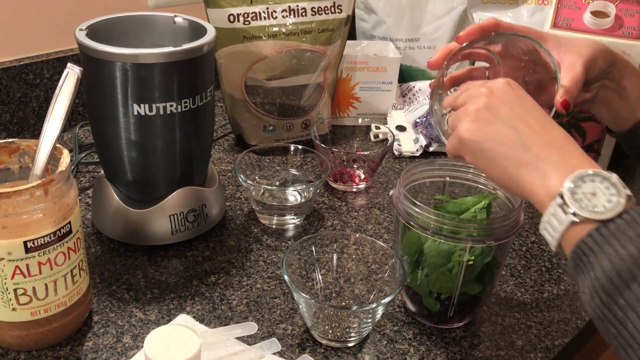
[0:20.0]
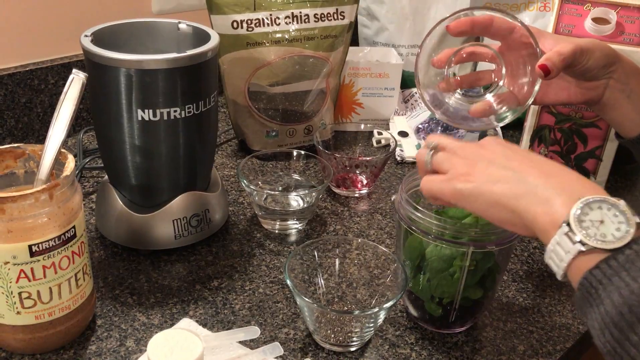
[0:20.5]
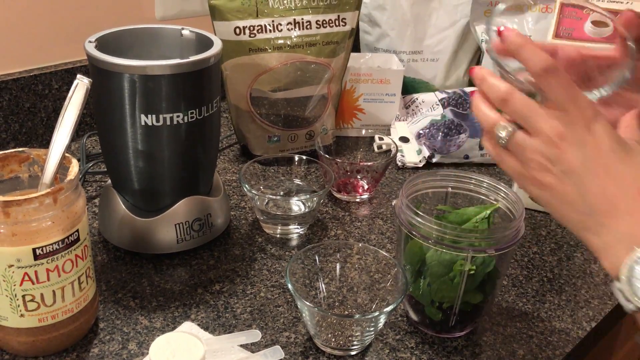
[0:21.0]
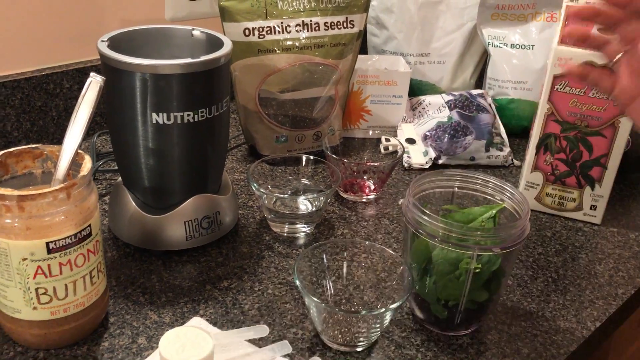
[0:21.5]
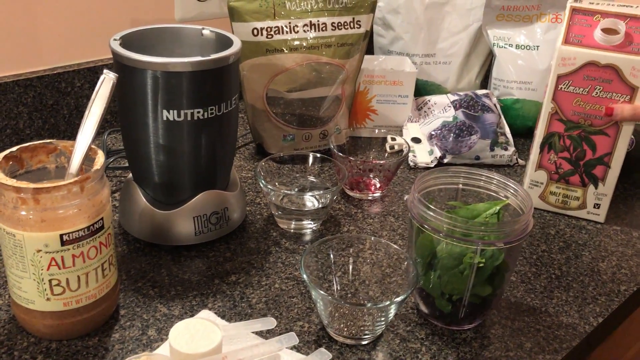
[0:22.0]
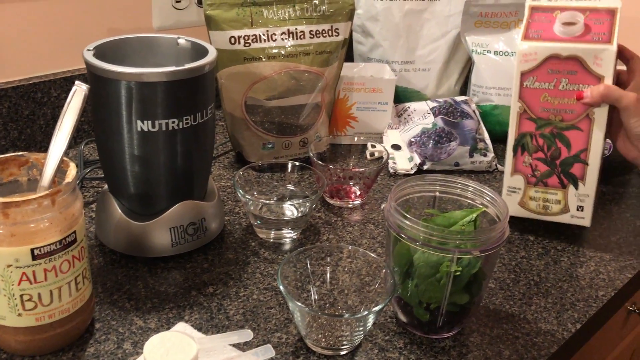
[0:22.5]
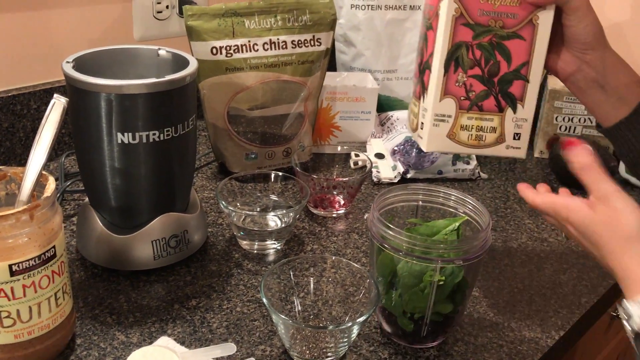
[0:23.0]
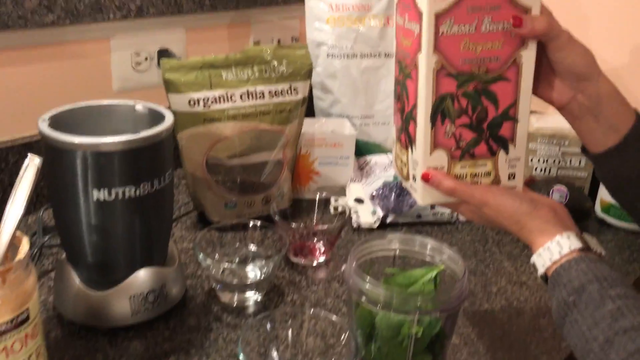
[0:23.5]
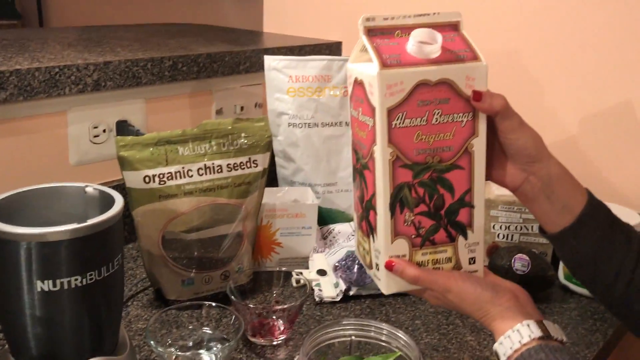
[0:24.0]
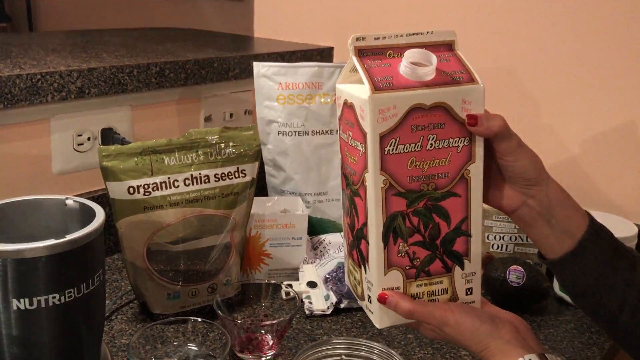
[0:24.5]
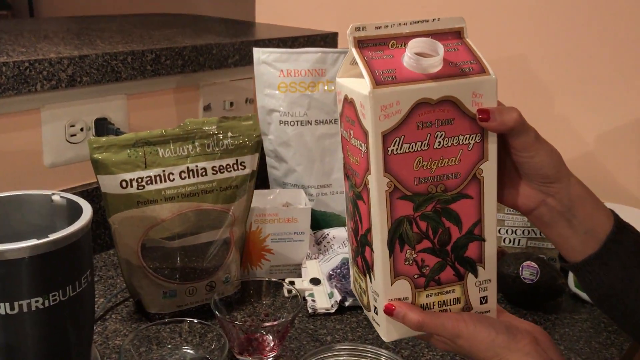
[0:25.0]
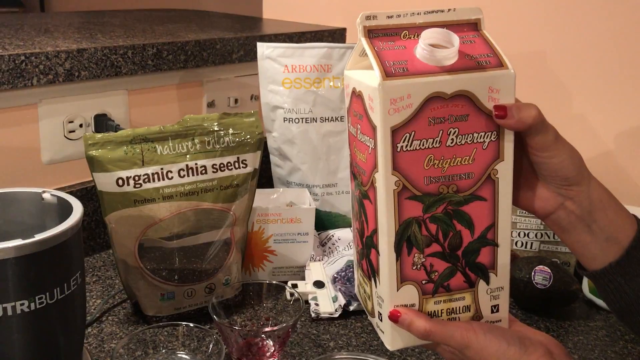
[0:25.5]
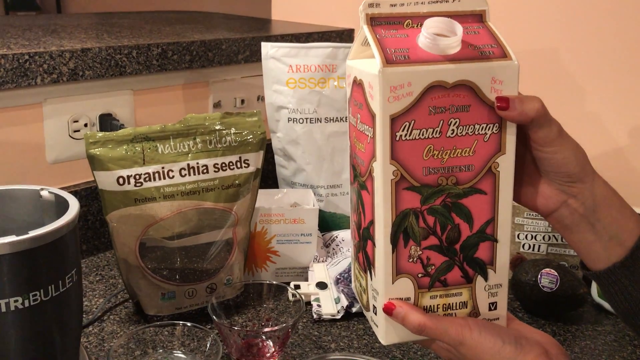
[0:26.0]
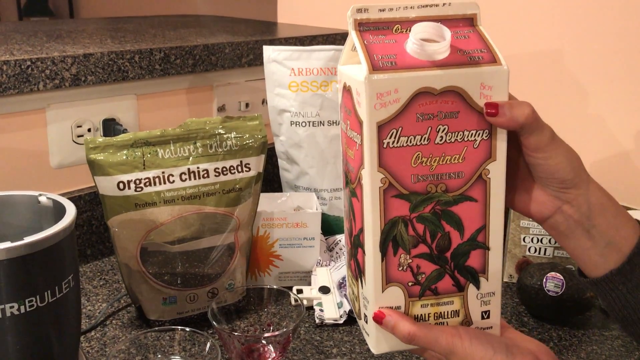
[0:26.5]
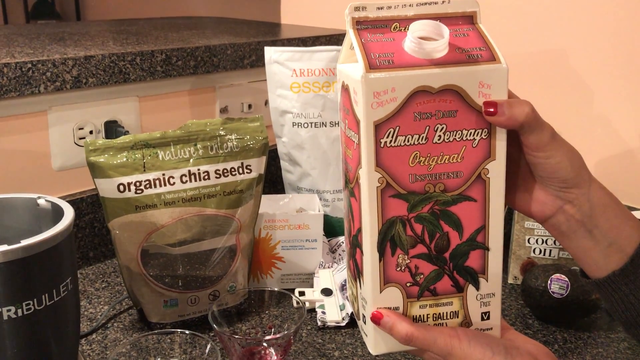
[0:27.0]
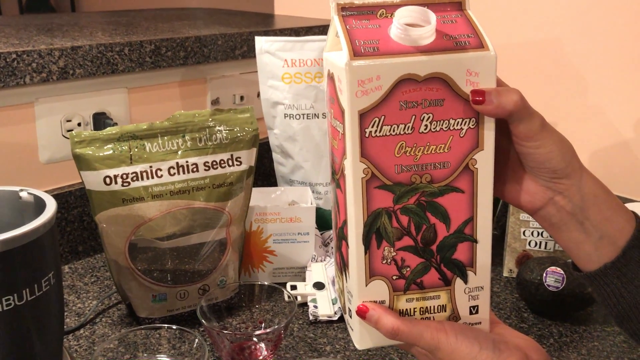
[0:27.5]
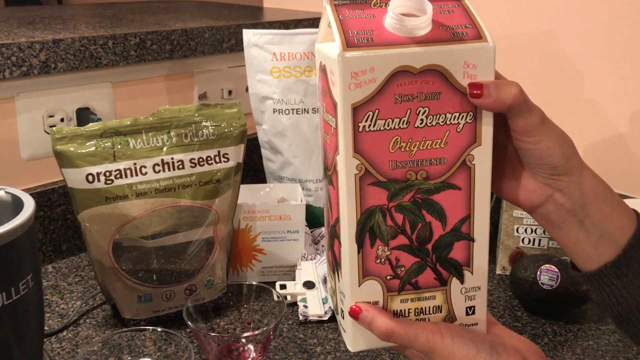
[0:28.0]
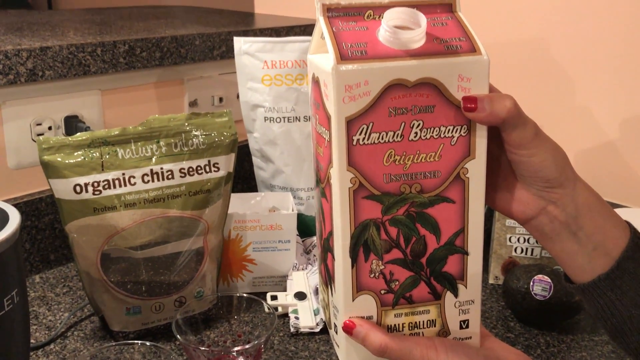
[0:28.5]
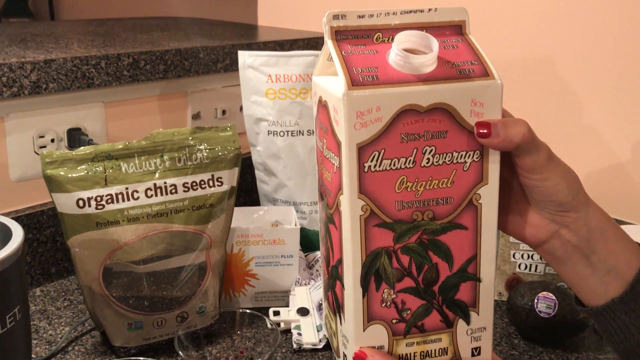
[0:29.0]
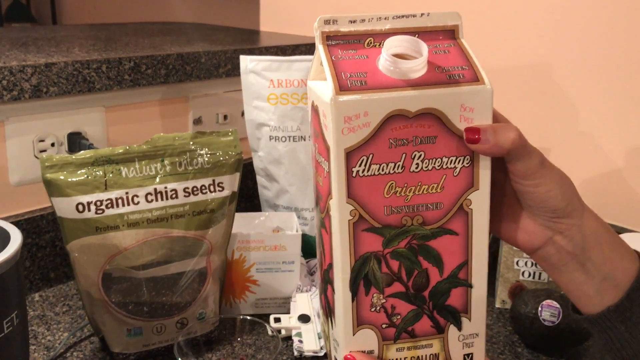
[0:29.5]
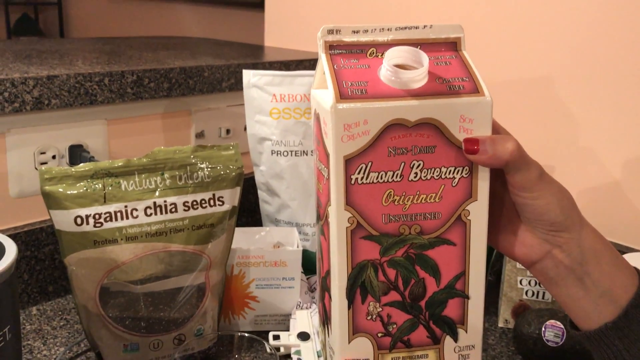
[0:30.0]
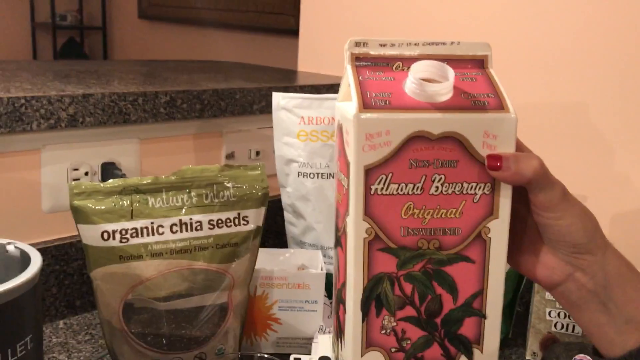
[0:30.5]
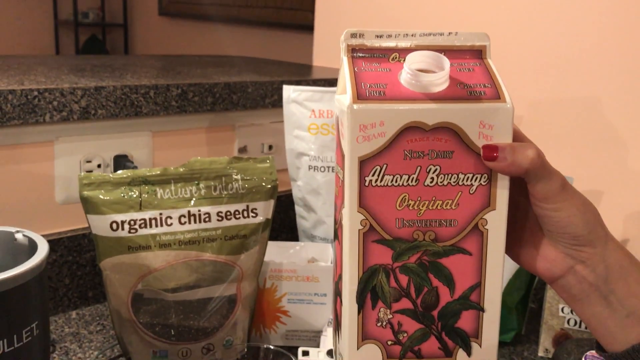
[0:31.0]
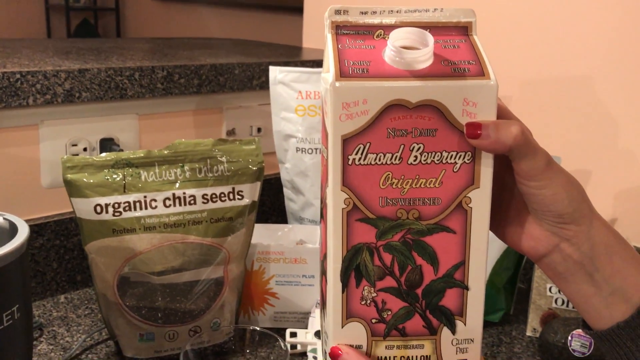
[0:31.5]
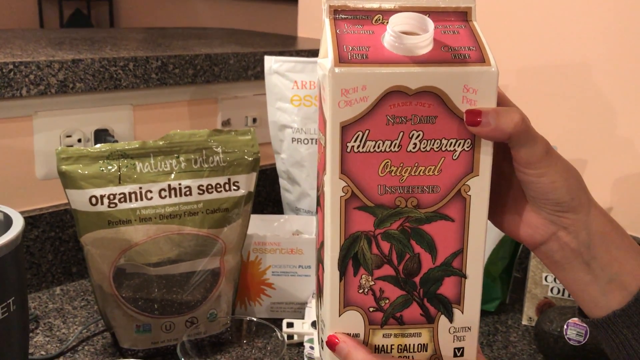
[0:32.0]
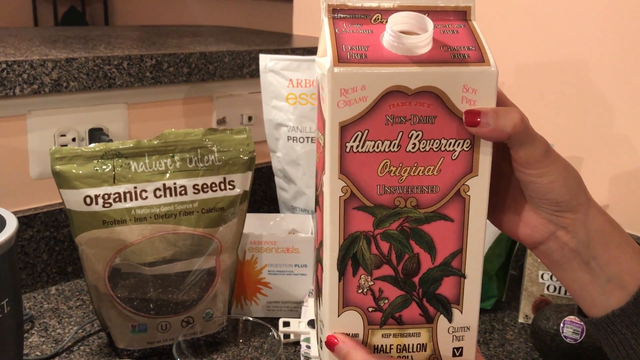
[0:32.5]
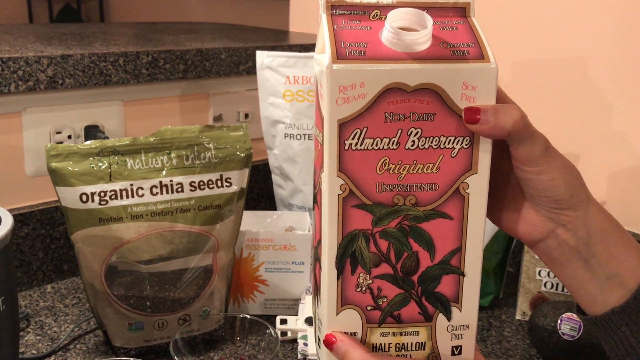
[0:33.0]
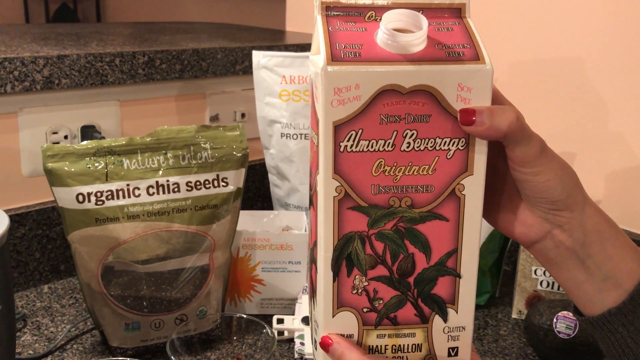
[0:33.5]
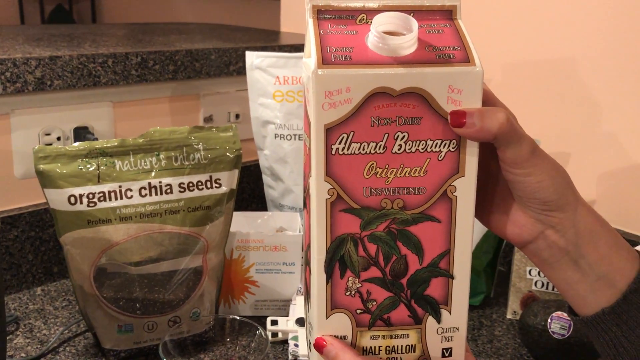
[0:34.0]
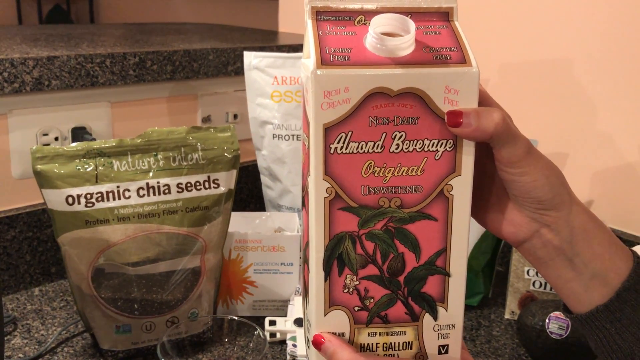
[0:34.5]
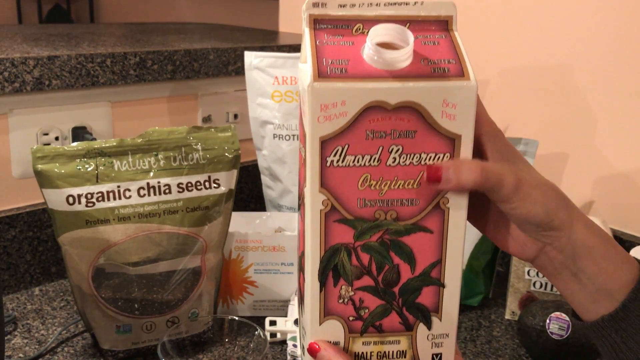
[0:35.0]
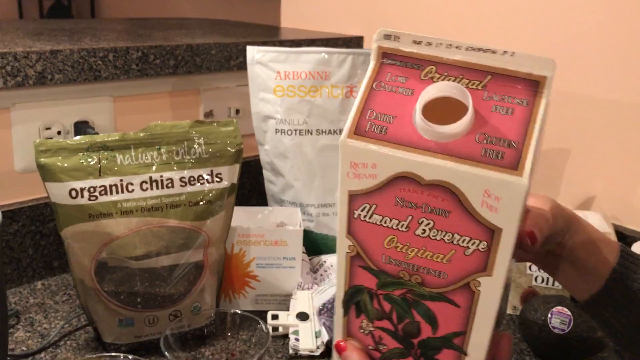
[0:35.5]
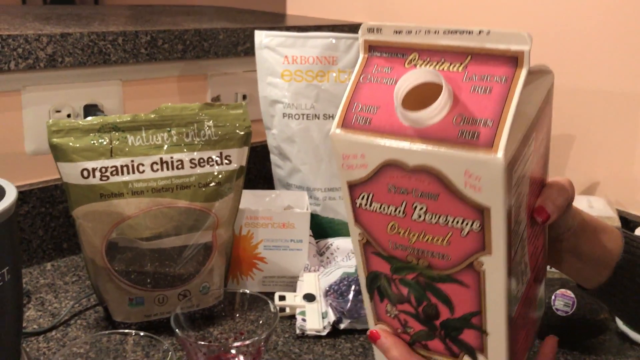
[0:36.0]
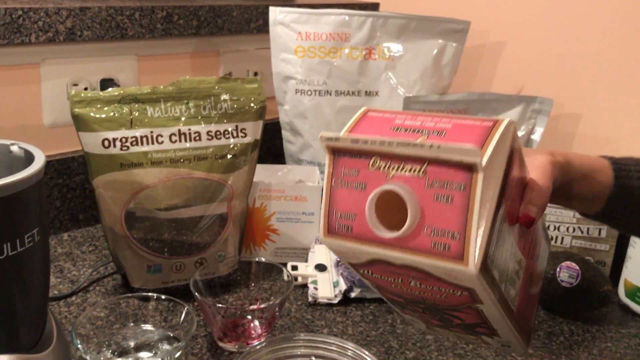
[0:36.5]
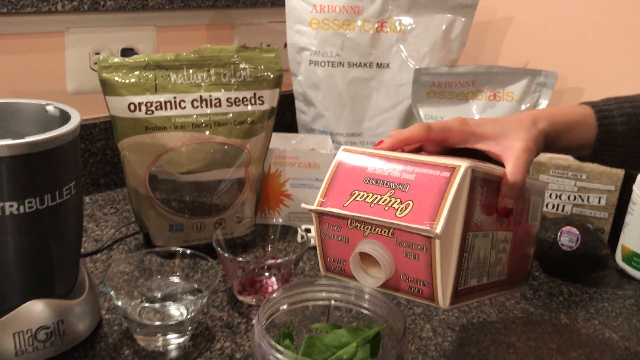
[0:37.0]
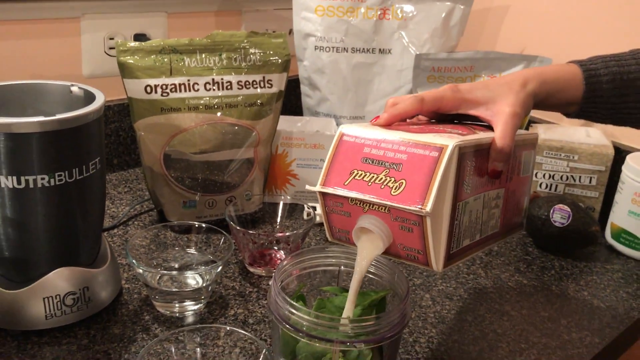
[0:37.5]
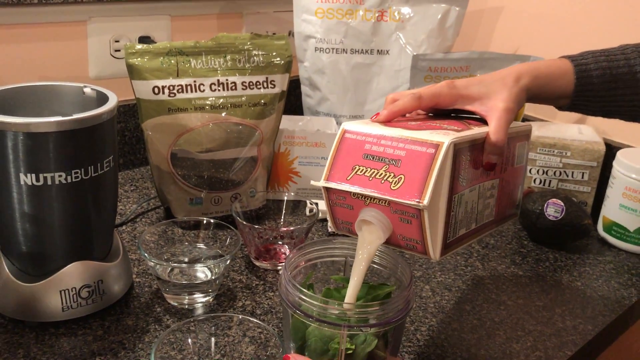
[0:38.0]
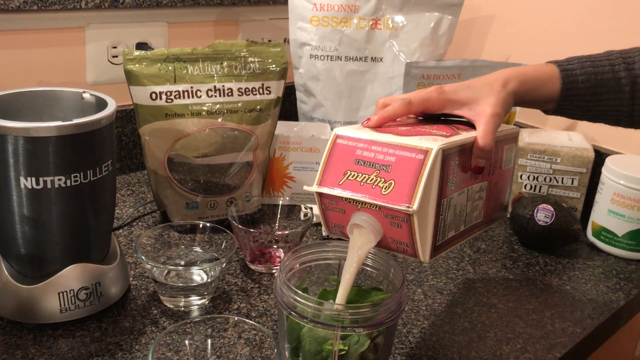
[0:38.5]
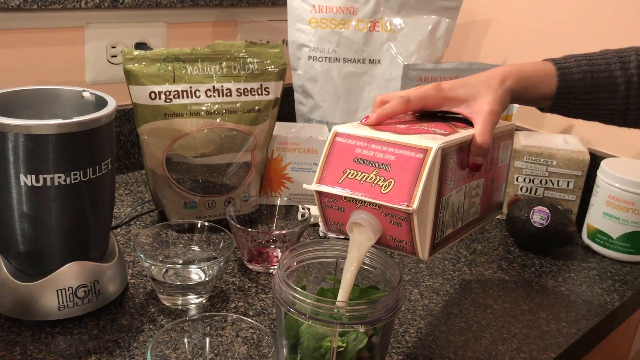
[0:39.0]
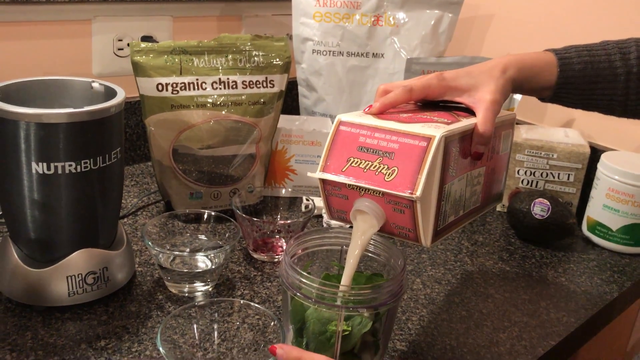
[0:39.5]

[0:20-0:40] The woman adds ingredients into one container. She starts with some red things from a small bowl that look like berries, then adds some green leaves; these are unlabeled, so it is unclear what they are. She lifts a box of "almond beverage original", which is dominated by a pink colour and has something like a branch with some leaves on it. Her fingers have red nail polish. She pours the contents of the box, which look like milk, onto the berries and leaves, in what is another part of the Nutri Bullet blender; the amount of milk looks like two cups.